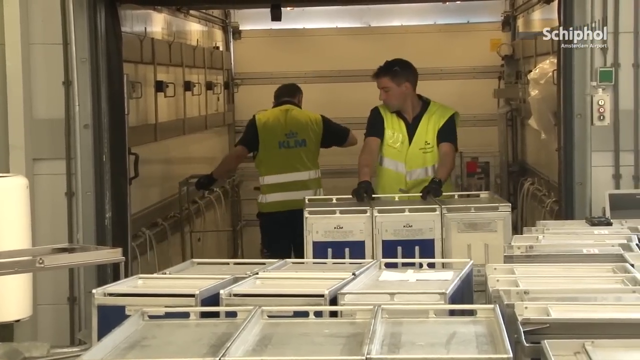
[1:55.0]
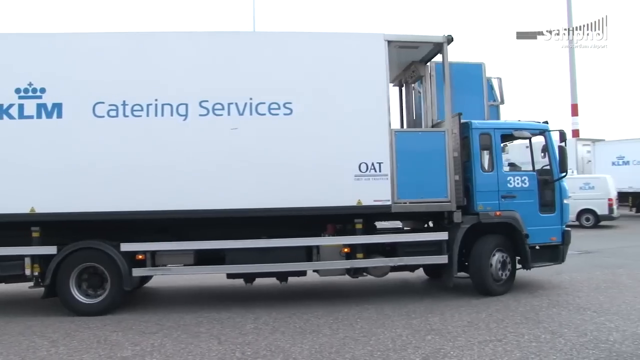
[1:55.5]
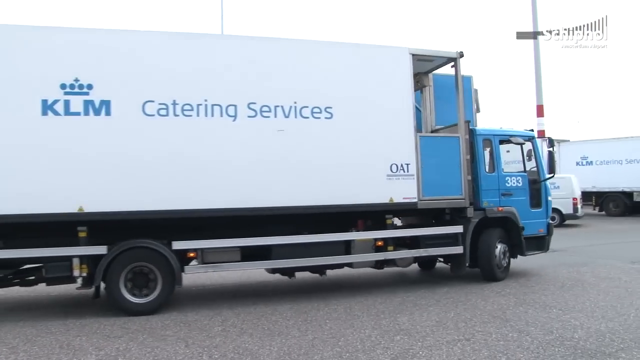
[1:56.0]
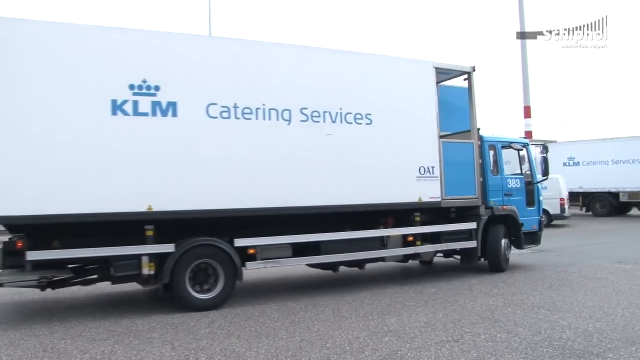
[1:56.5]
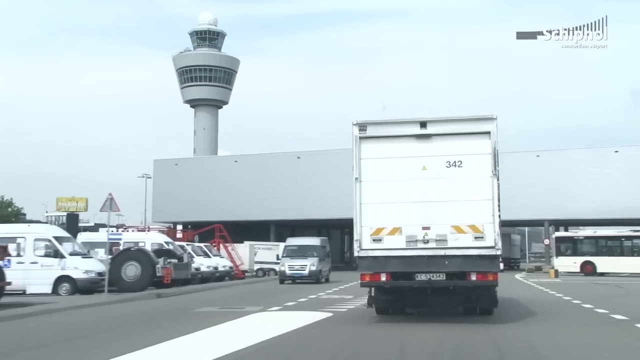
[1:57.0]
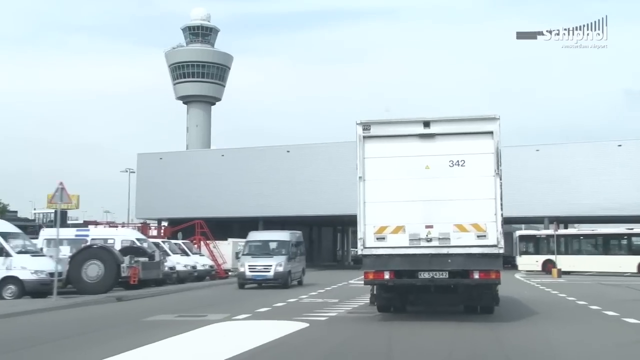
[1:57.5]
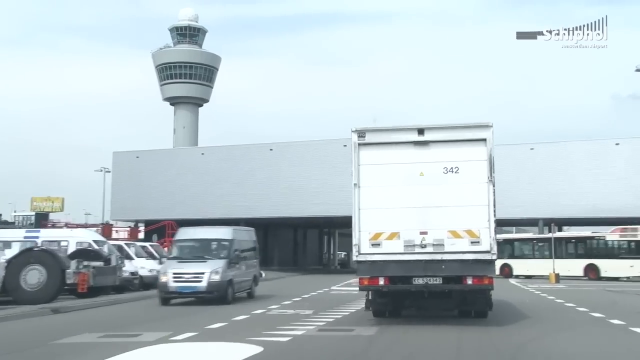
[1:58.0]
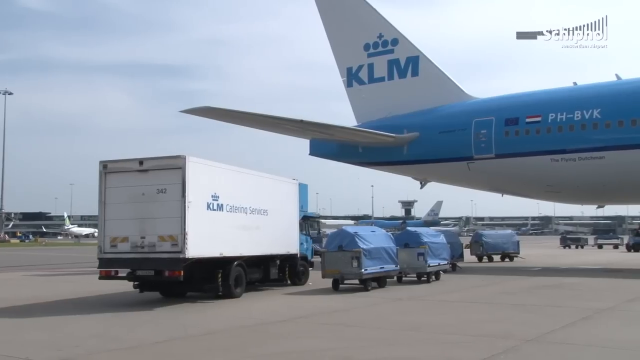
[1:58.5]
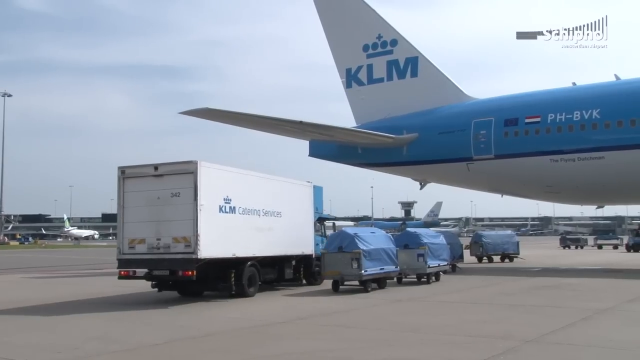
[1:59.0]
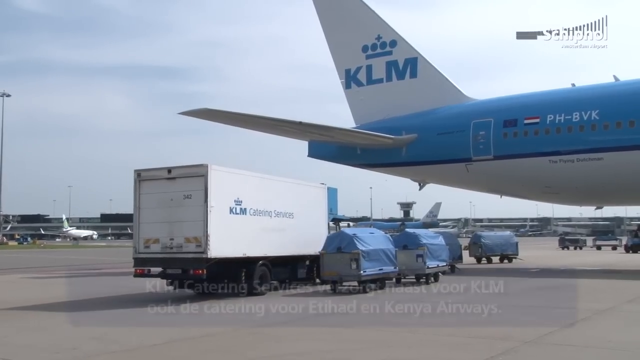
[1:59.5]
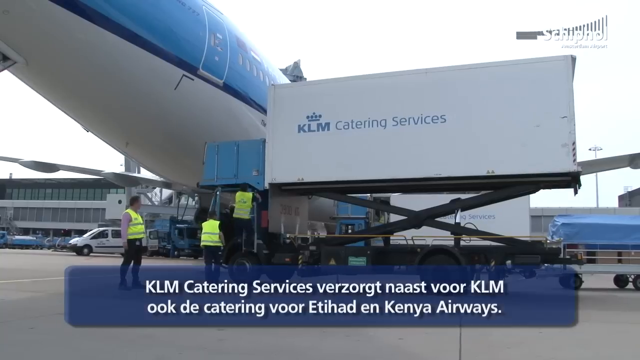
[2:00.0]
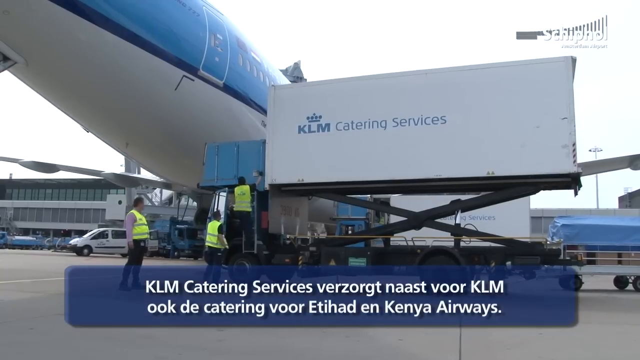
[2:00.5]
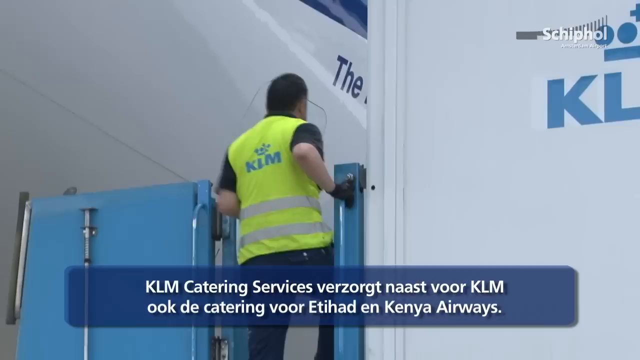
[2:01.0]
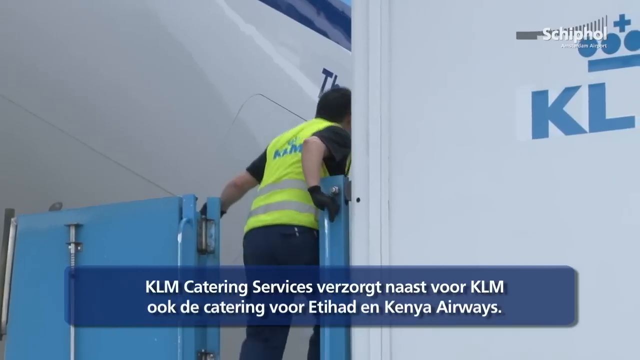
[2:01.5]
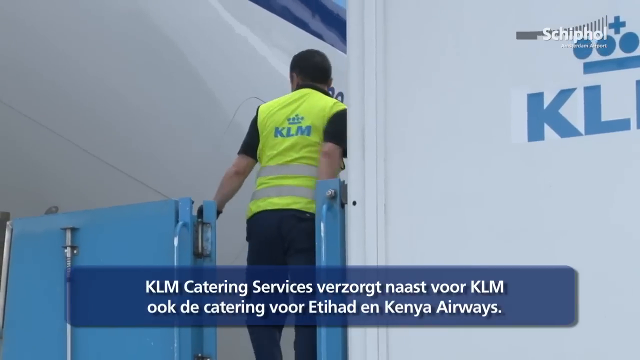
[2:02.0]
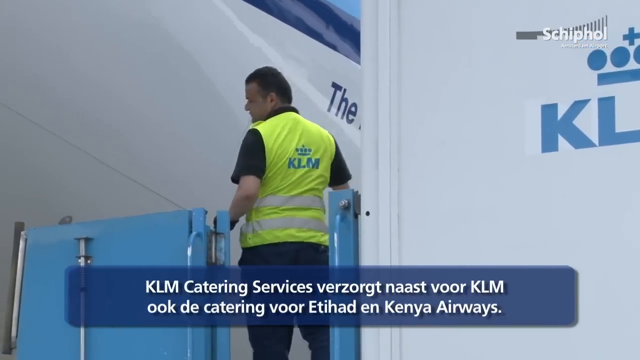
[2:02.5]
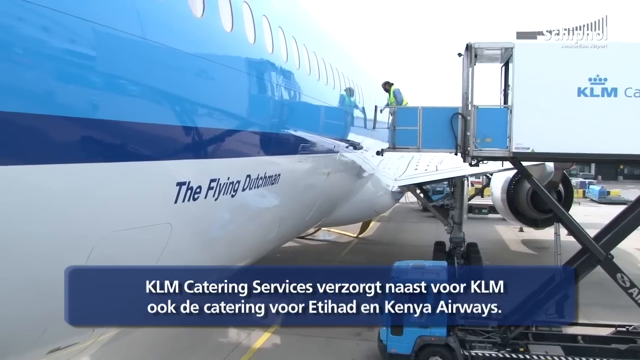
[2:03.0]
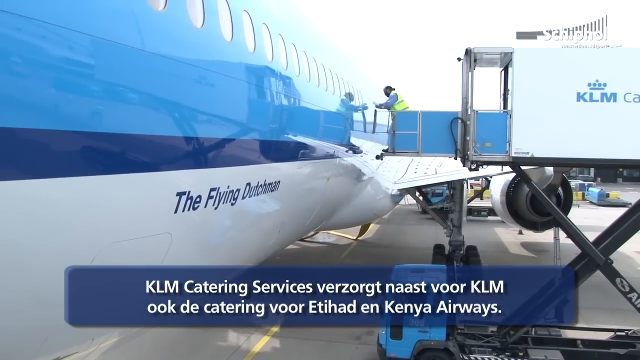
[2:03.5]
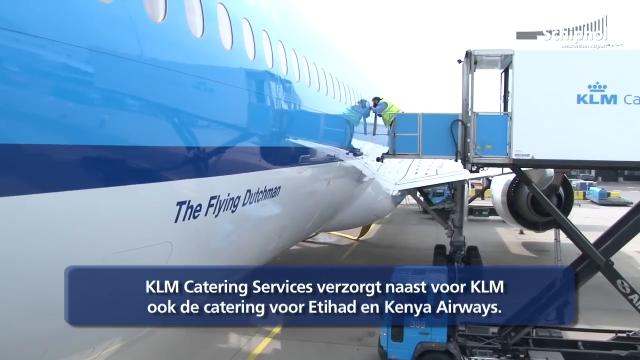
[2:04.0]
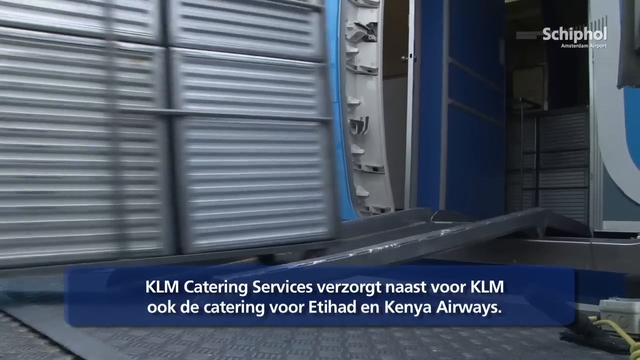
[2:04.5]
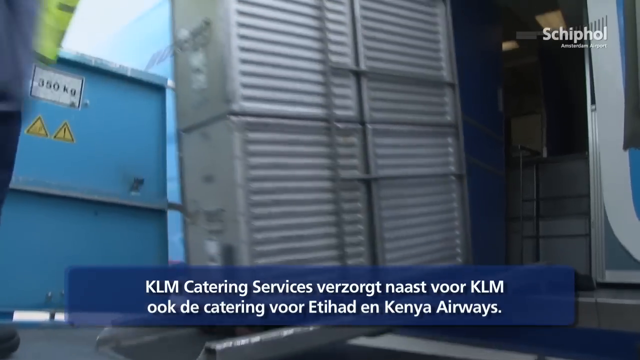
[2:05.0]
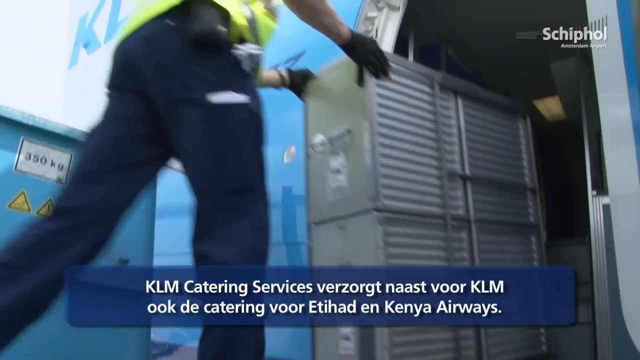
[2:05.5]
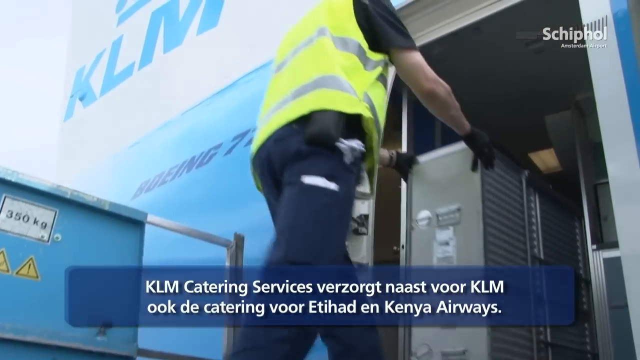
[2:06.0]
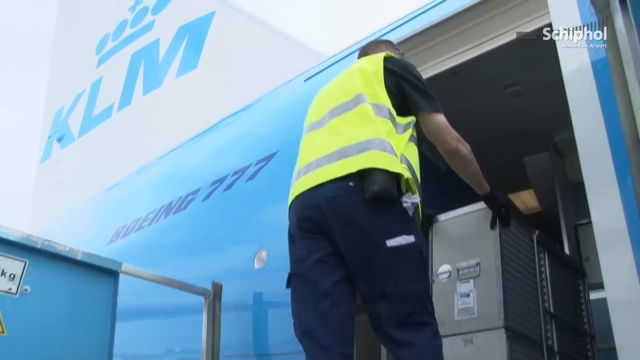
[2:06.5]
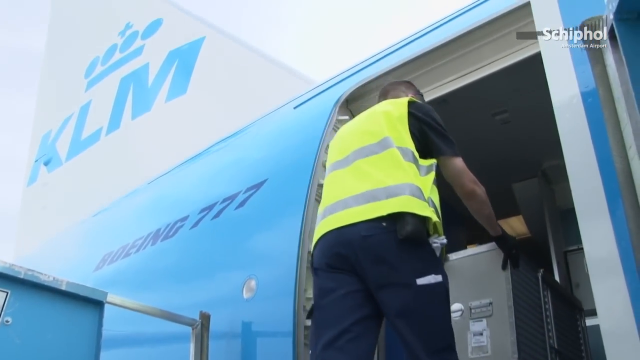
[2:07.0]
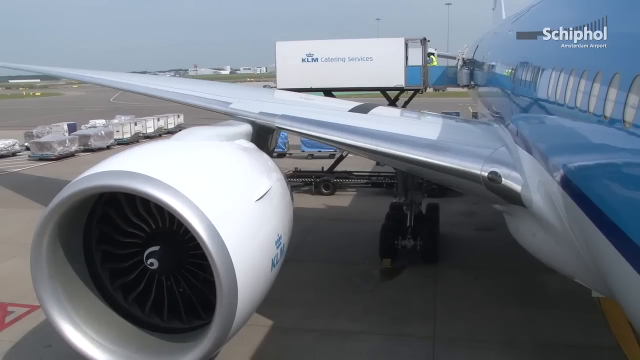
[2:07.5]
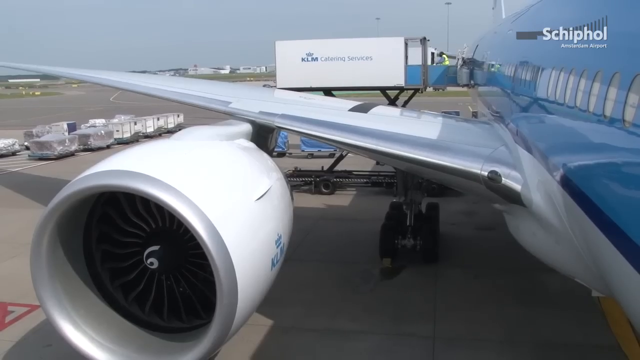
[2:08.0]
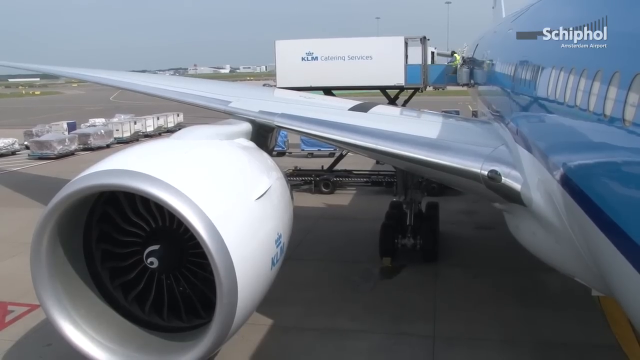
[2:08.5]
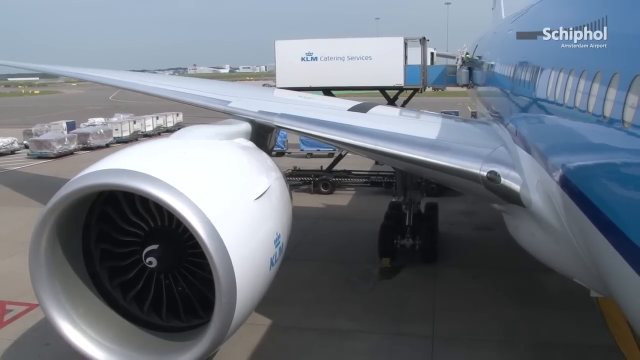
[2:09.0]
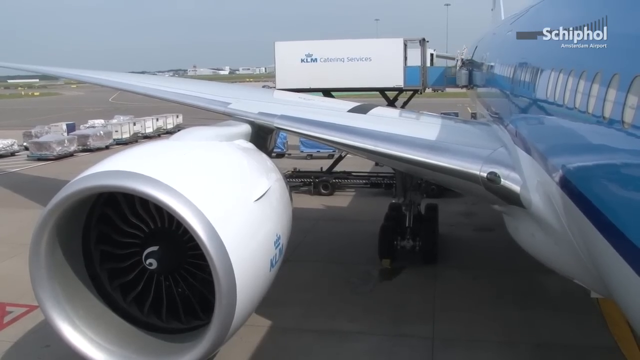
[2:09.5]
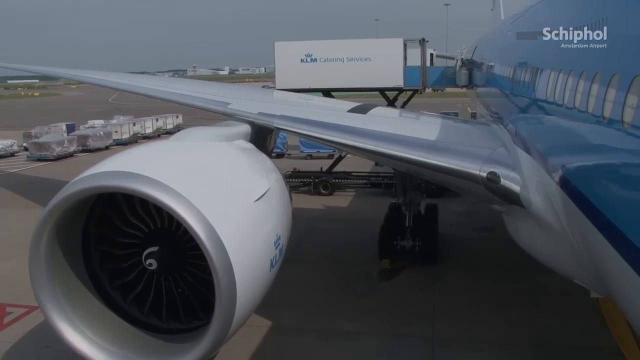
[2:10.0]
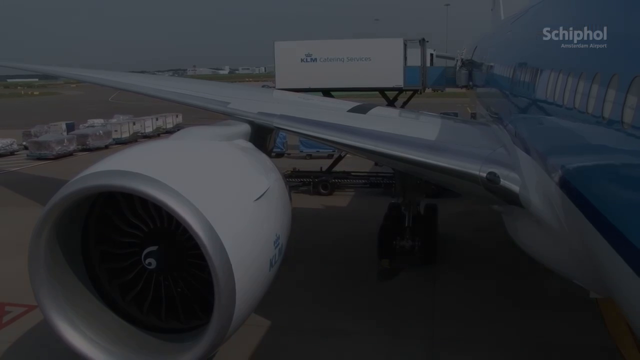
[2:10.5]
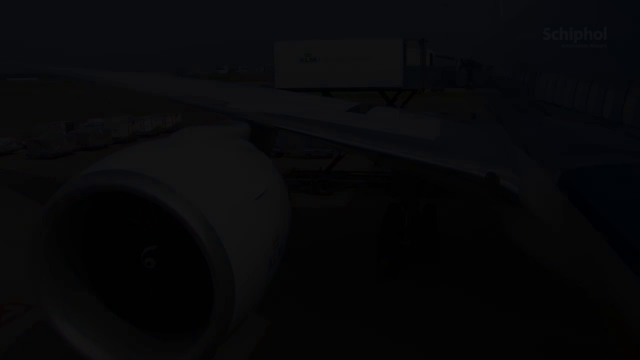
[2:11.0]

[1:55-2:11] Two men in reflective vests quickly push stainless steel or aluminum boxes into a truck. Outside, a big white box truck reads "KLM Catering Services" on the airstrip at the airport. It pulls up to an airplane, and its big box is lifted up to the rear door of the plane. Workers in vests unload the box truck, pushing the aluminum boxes up a little gangplank or ramp into the plane. The plane is a big blue and white jet with "KLM" on the tail wing, "the flying Dutchman" on it, and "Boeing 777" on it. The final shot shows one of the engines underneath the wing, with workers moving the aluminum boxes onto the plane in the background.